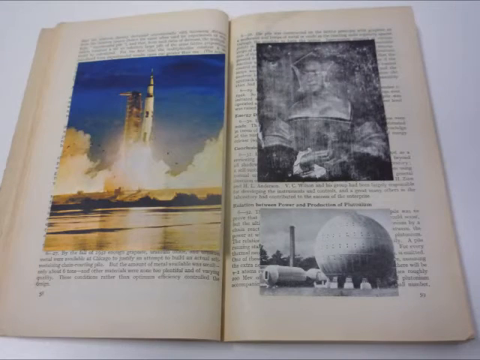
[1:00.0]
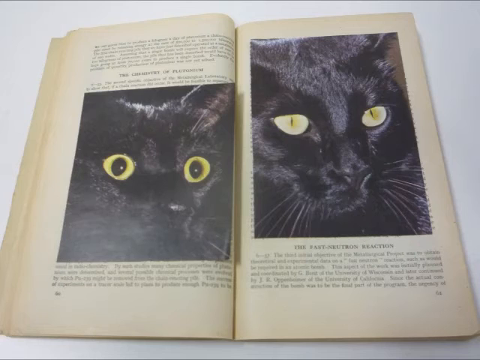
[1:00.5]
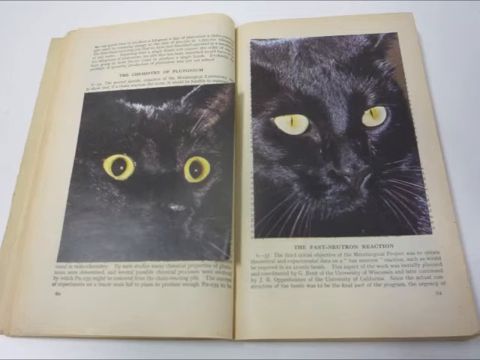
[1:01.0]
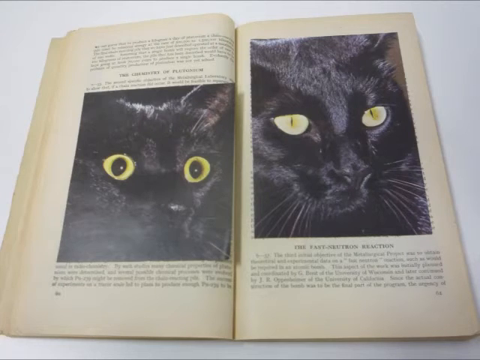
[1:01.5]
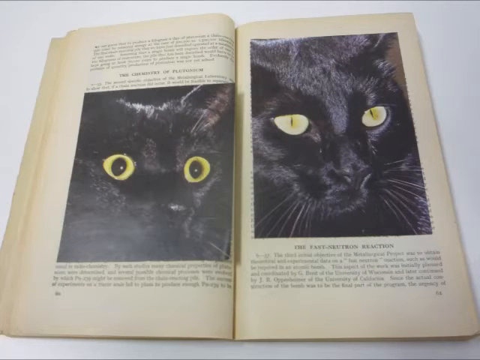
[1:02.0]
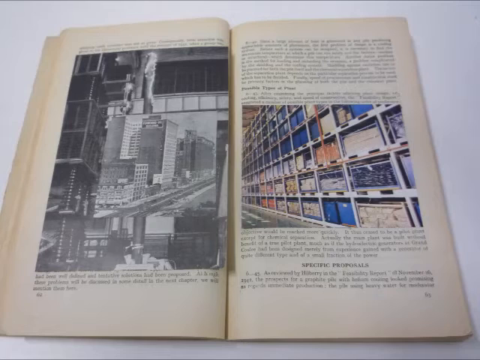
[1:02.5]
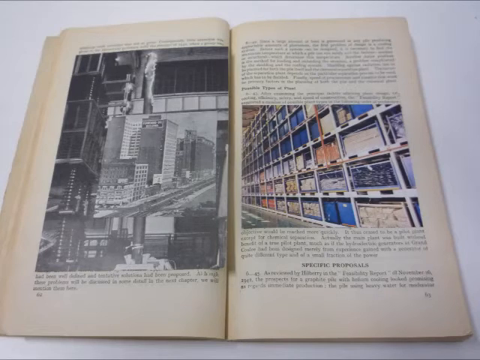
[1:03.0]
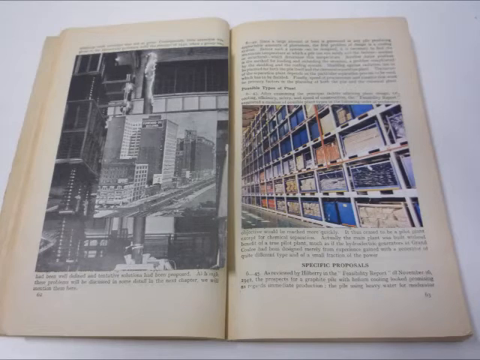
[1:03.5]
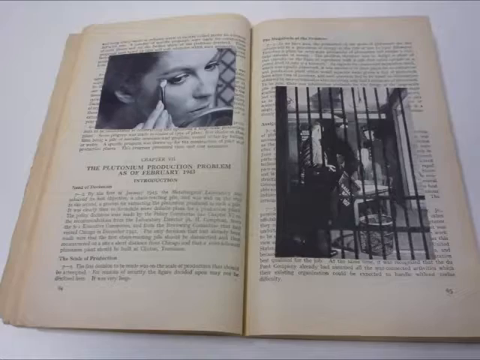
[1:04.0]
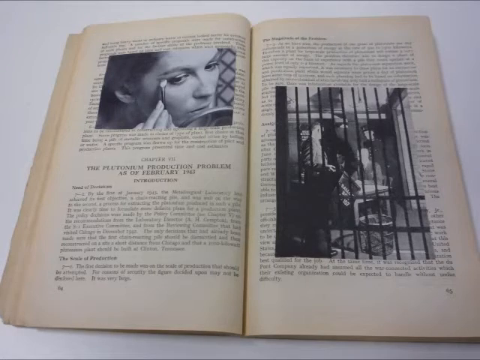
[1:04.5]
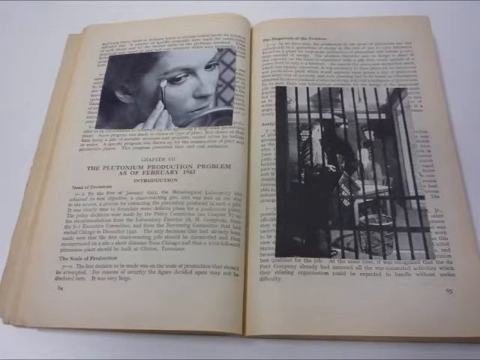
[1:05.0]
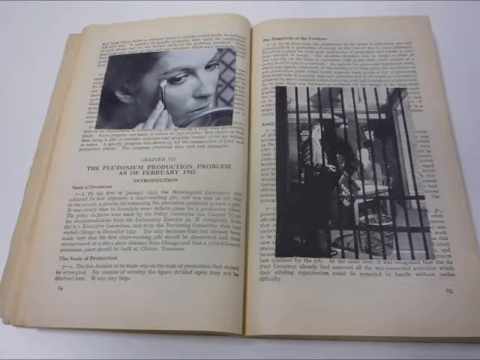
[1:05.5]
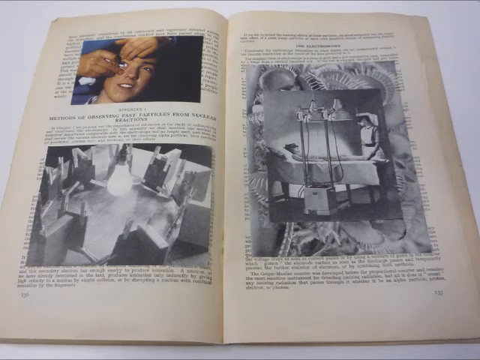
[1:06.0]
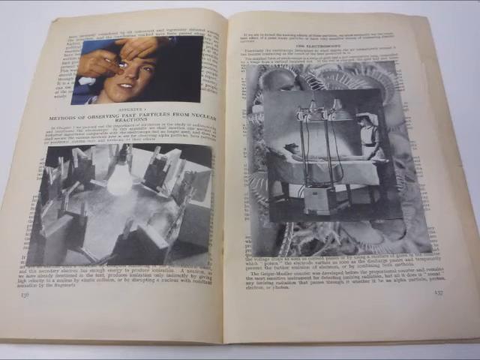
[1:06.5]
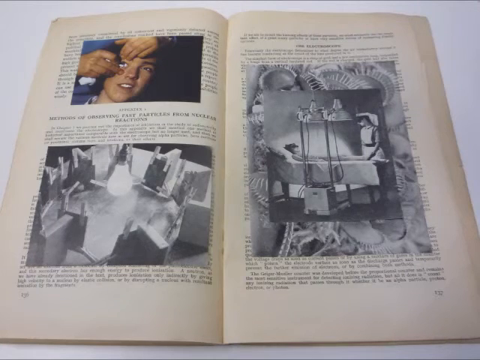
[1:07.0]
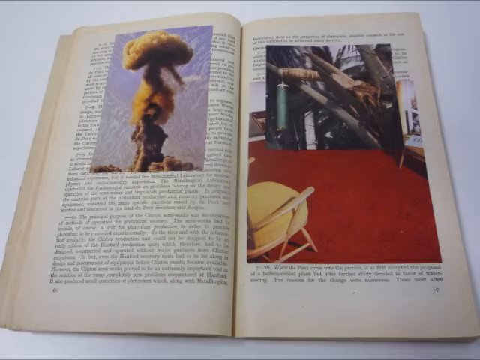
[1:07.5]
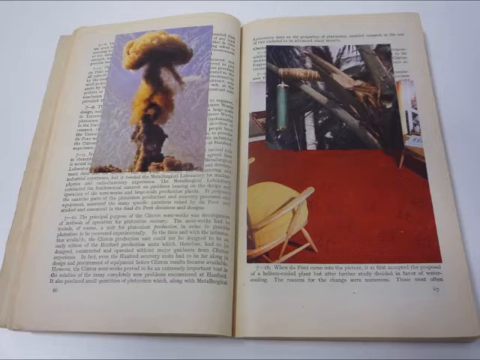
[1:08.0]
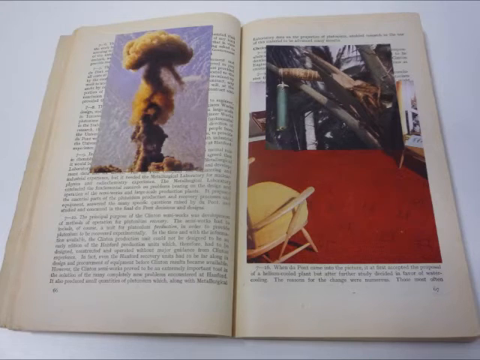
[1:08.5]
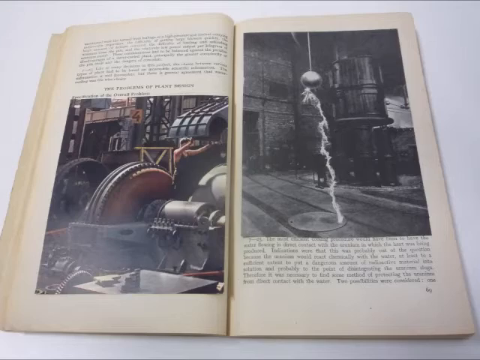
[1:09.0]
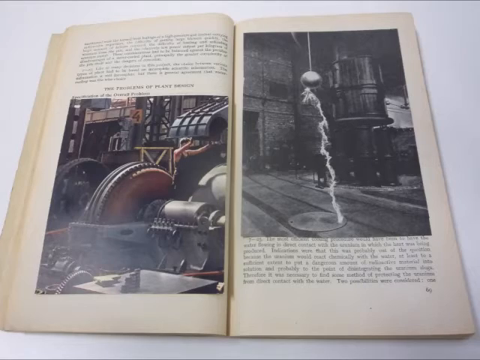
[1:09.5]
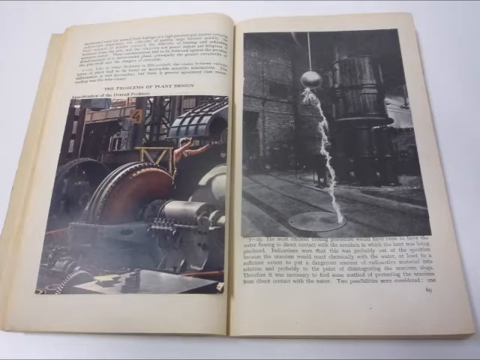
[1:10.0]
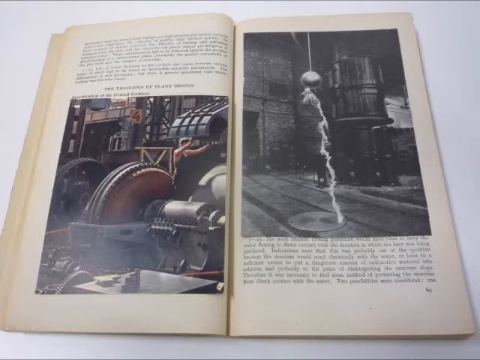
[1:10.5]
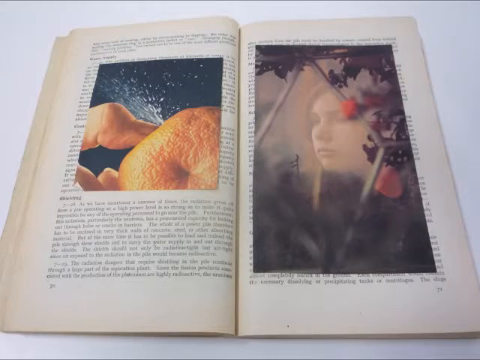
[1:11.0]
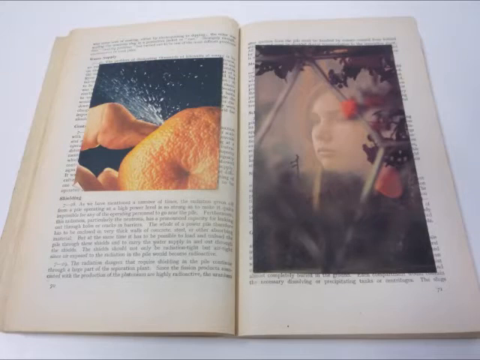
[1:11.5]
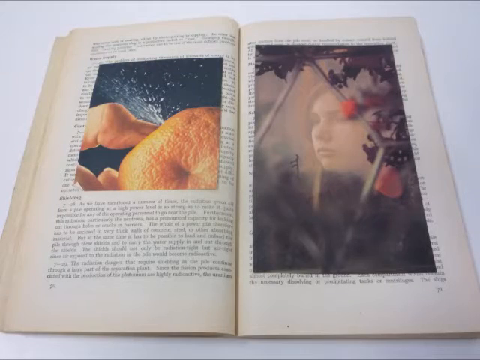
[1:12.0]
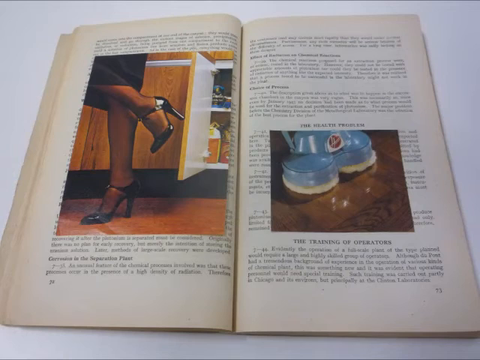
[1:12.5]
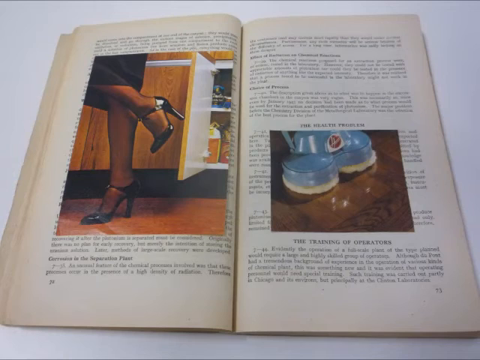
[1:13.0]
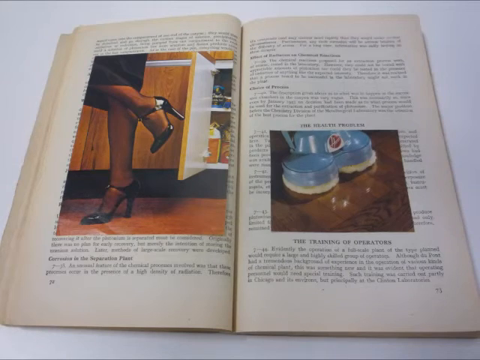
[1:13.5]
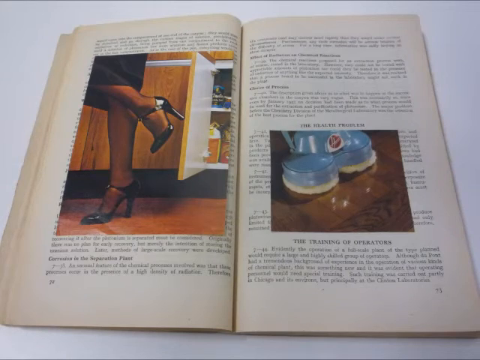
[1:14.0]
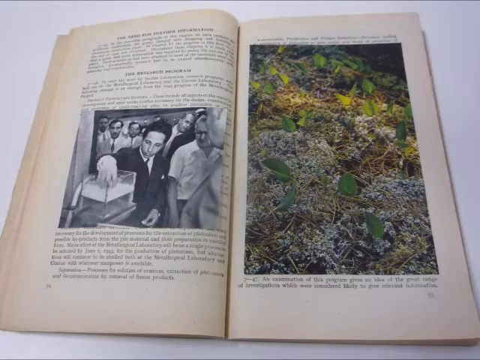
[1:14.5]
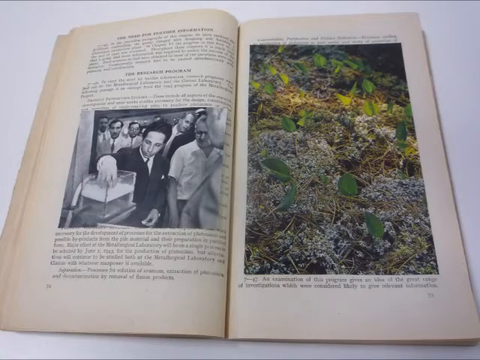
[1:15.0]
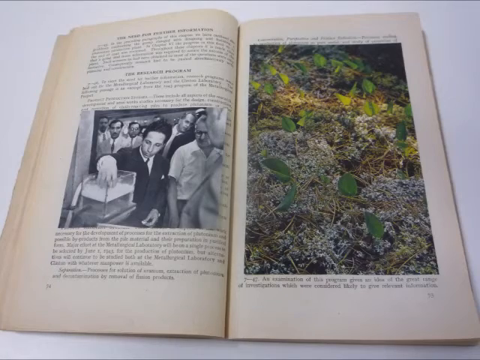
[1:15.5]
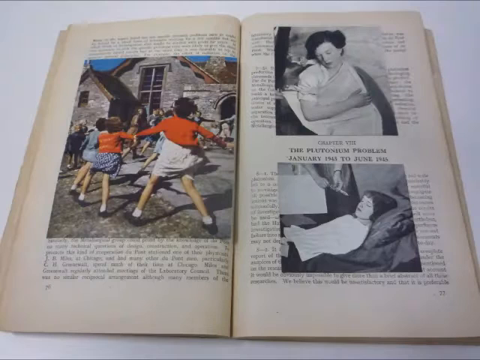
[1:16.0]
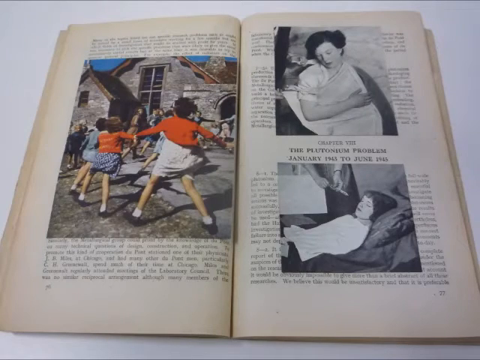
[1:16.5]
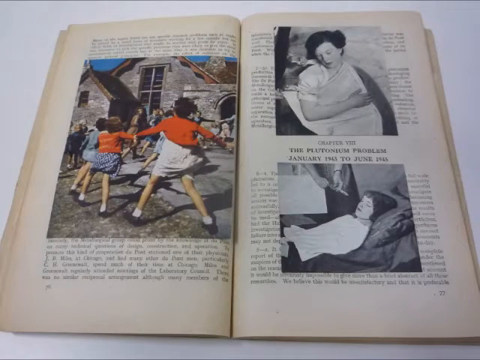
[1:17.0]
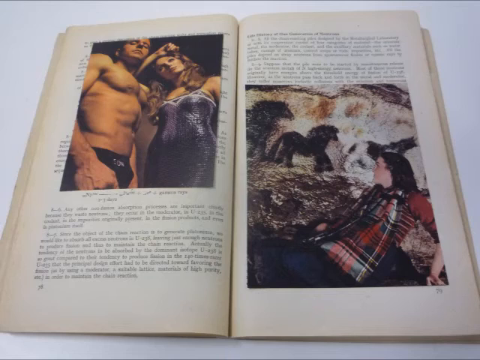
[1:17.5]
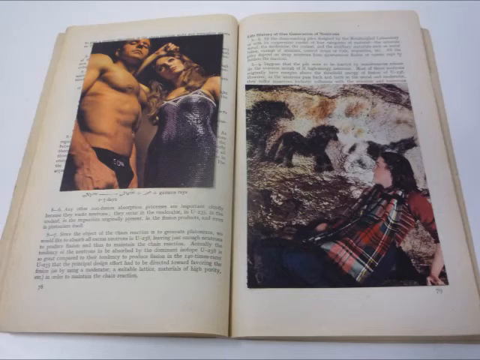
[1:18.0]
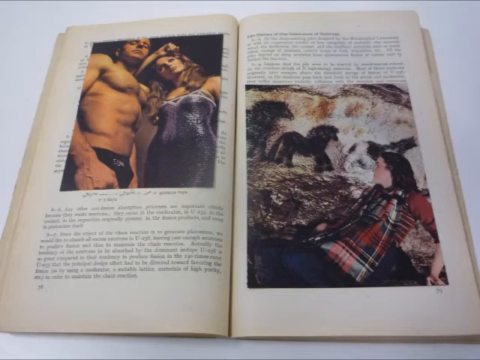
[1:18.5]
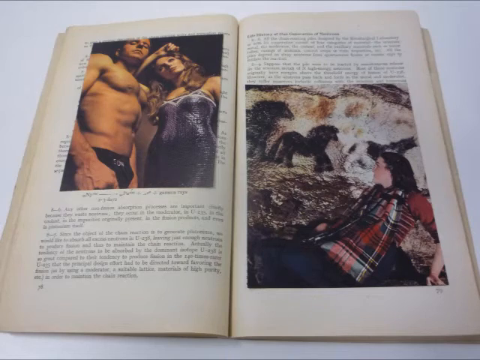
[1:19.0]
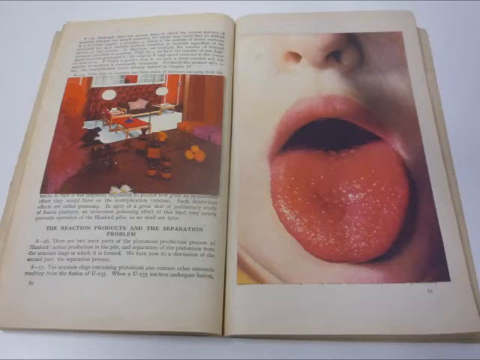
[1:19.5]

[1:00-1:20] Inside the 1945 nuclear energy leaflet, chapter 7 is headed "the plutonium production problem as of February 1943", followed by a lot of black and white text. Several photographs have been inserted loosely into the leaflet rather than within the text, showing a variety of things. On the chapter 7 page there is a black and white image of a lady applying eye makeup, alongside an unclear image that looks like it might show someone who has been imprisoned being interviewed by someone possibly in military uniform. Another page has an image of someone doing someone else's makeup, a nurse attending someone at a hospital bed, and what looks like some sort of light experiment. Another page shows the aftermath of an explosion and a chair on a red carpet. The photographs seem to be a variety of historical ones.